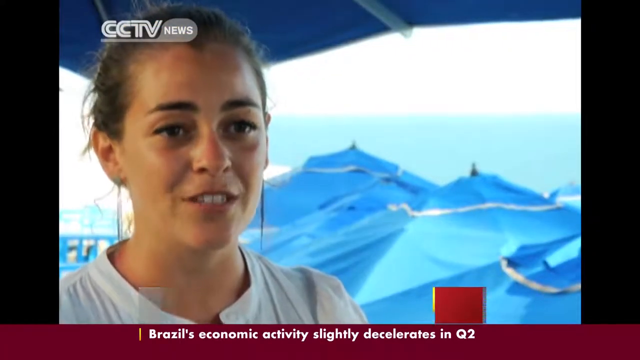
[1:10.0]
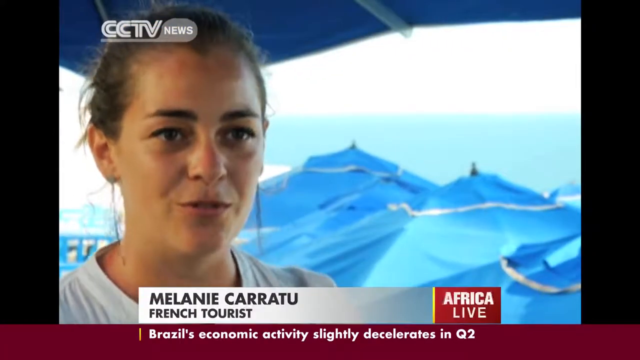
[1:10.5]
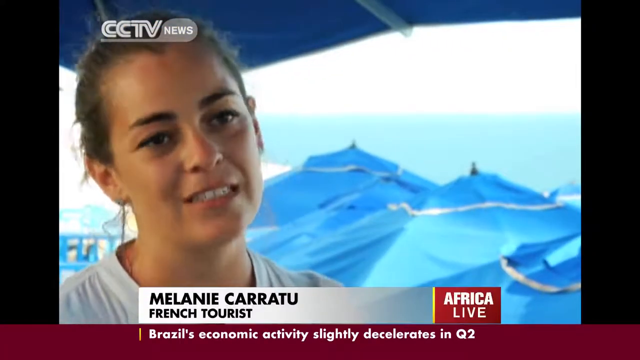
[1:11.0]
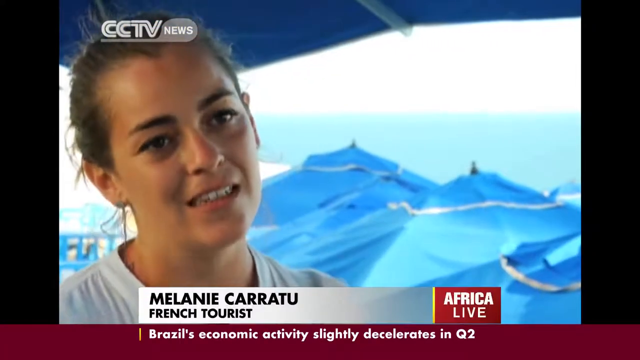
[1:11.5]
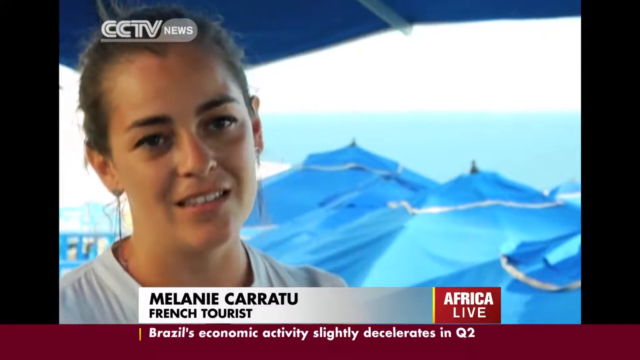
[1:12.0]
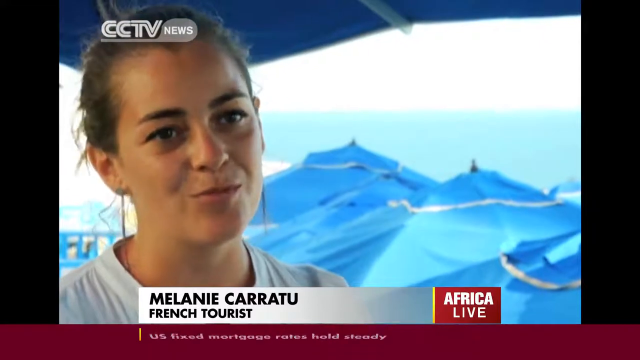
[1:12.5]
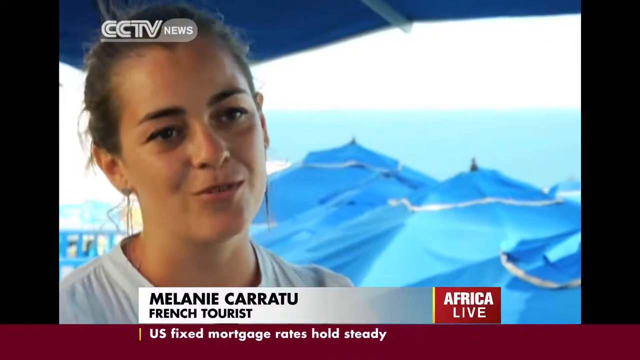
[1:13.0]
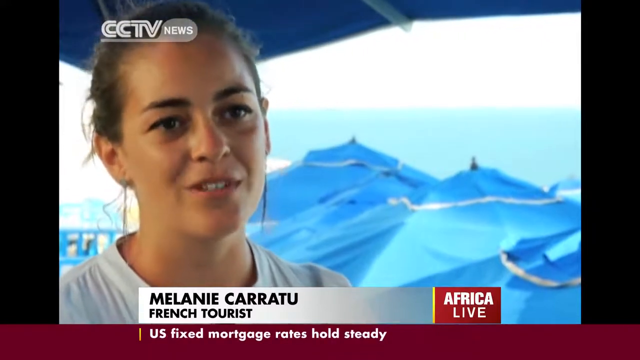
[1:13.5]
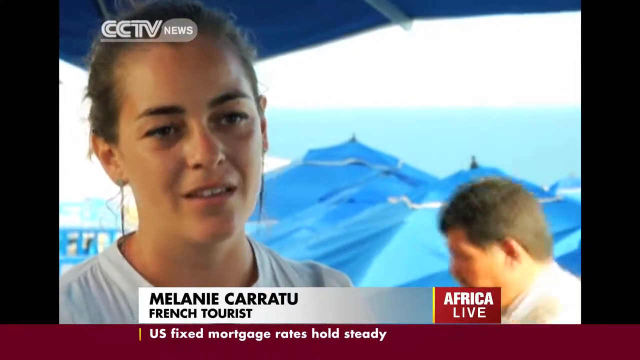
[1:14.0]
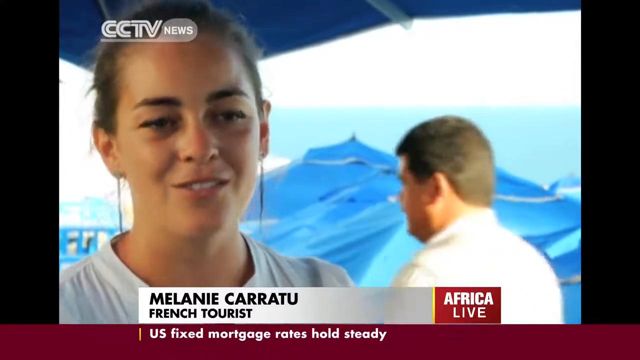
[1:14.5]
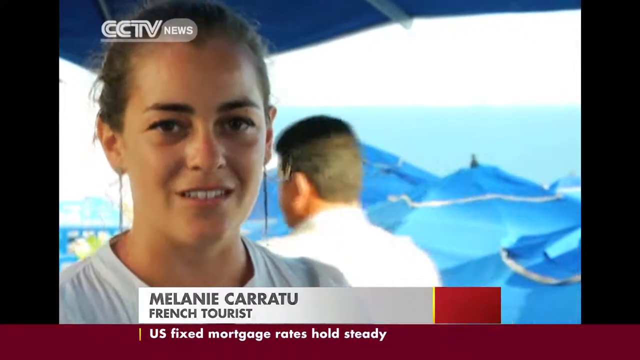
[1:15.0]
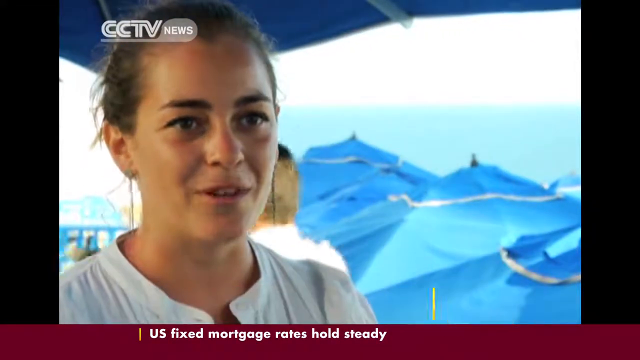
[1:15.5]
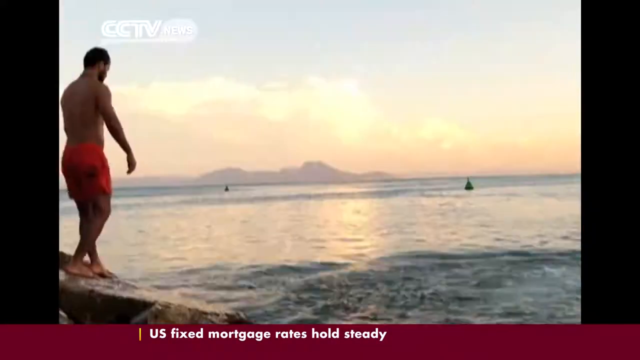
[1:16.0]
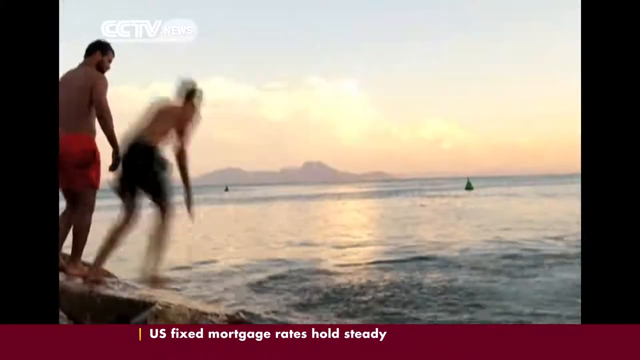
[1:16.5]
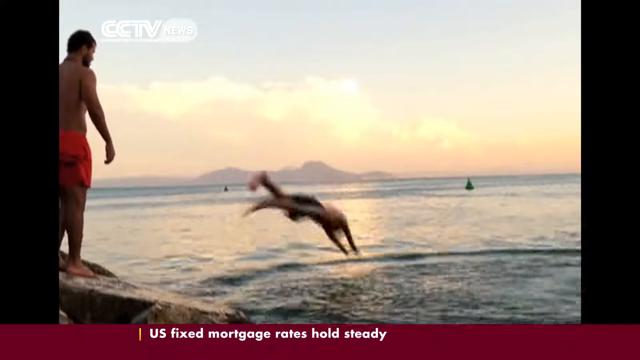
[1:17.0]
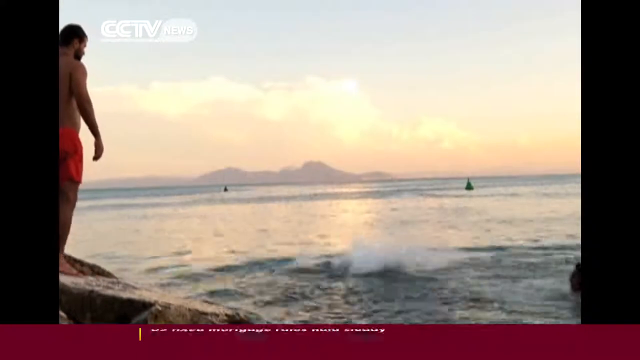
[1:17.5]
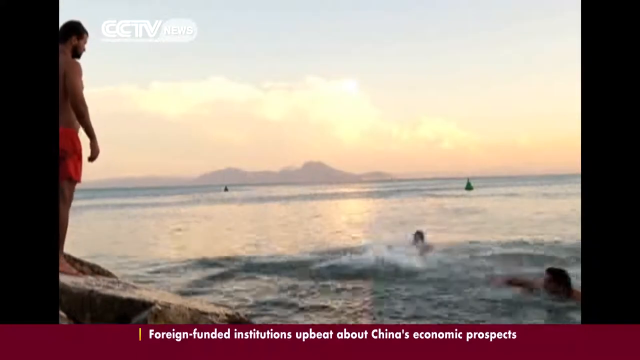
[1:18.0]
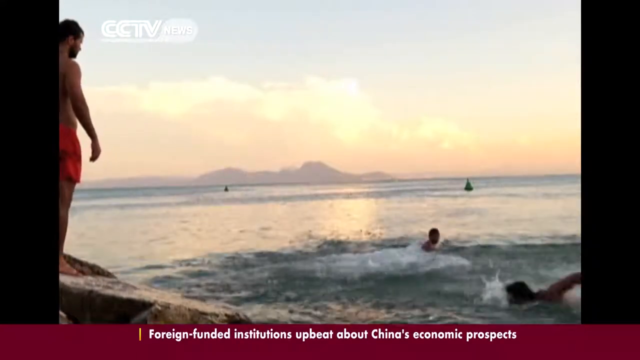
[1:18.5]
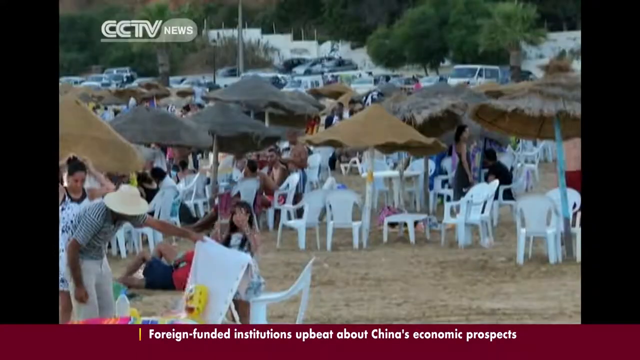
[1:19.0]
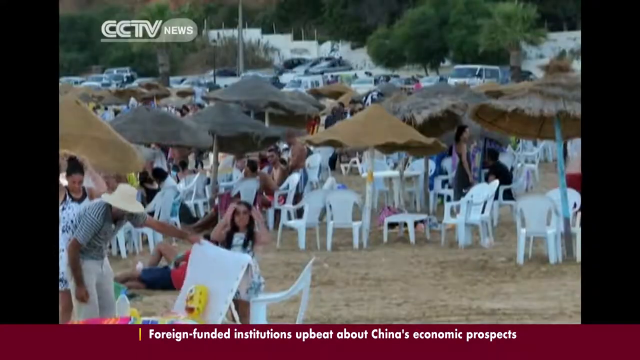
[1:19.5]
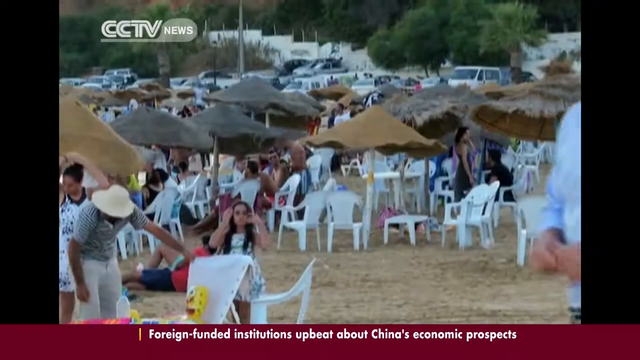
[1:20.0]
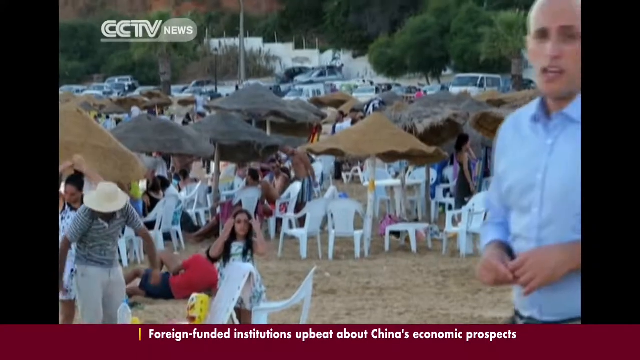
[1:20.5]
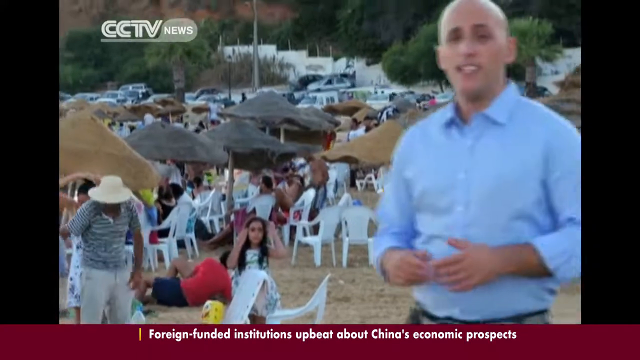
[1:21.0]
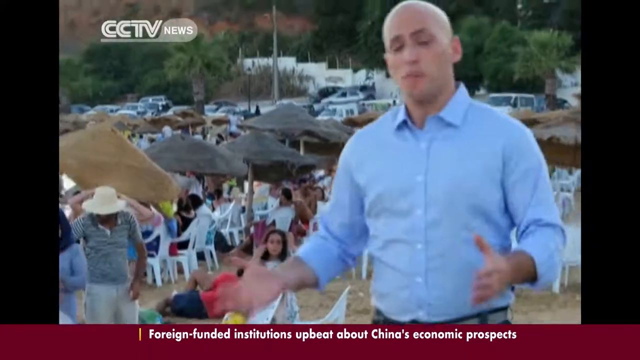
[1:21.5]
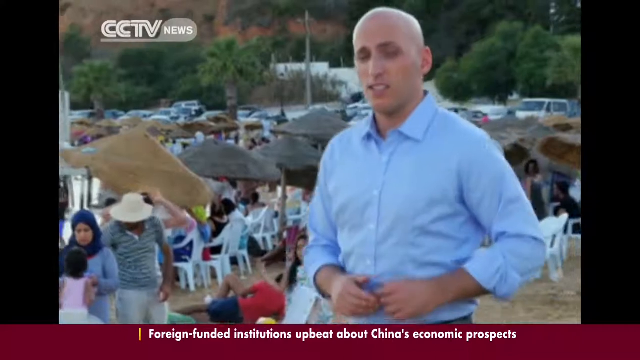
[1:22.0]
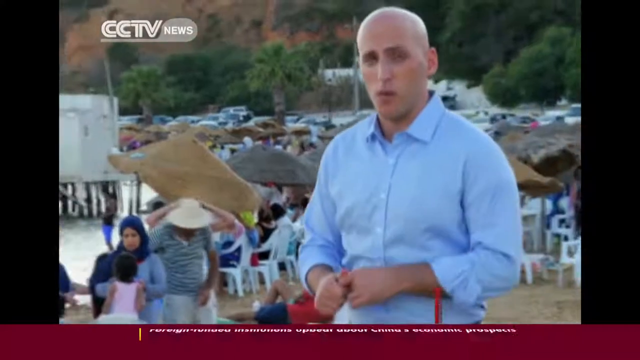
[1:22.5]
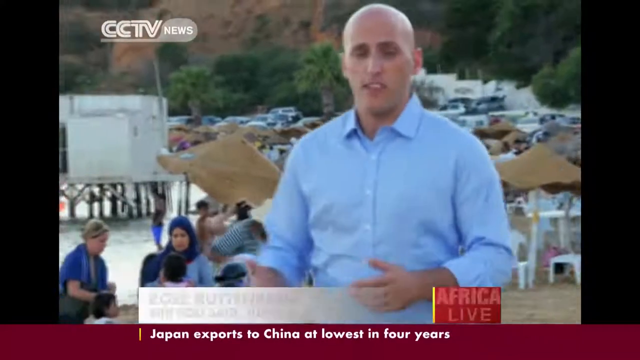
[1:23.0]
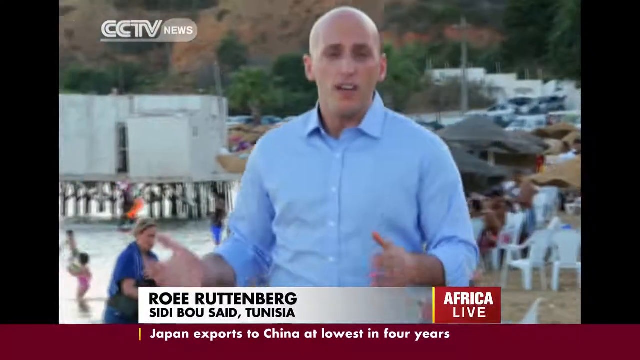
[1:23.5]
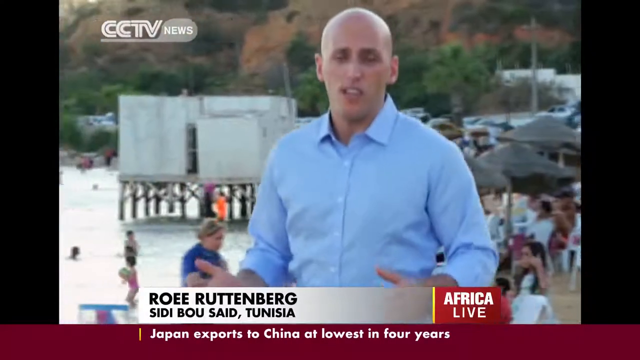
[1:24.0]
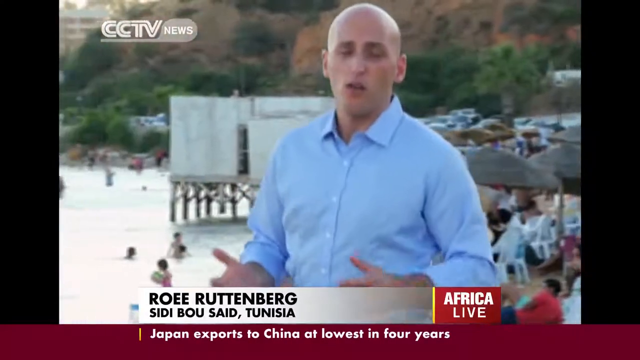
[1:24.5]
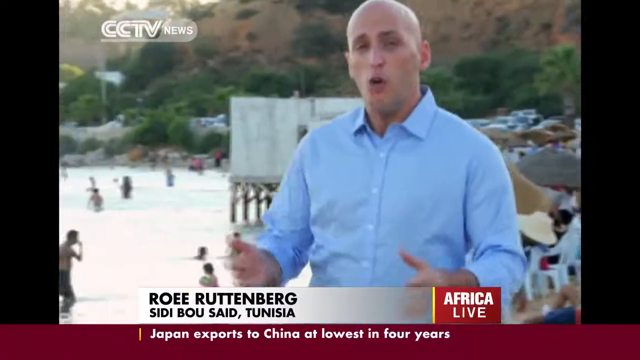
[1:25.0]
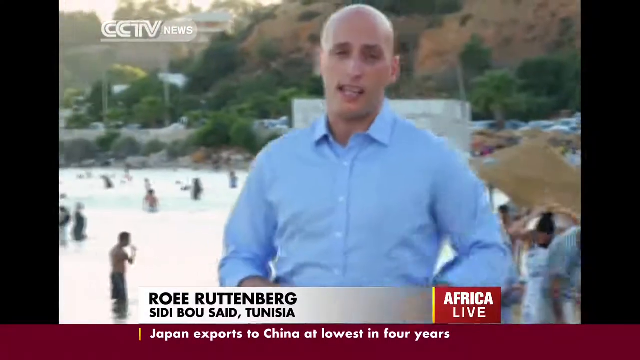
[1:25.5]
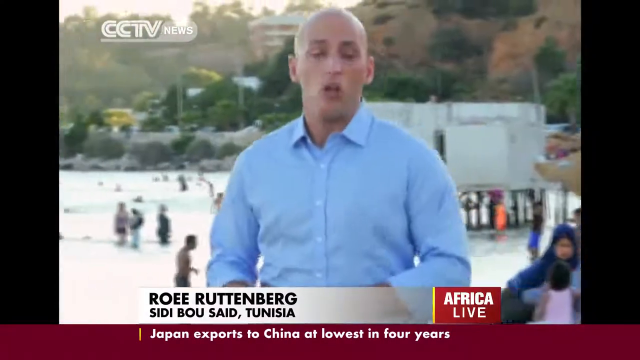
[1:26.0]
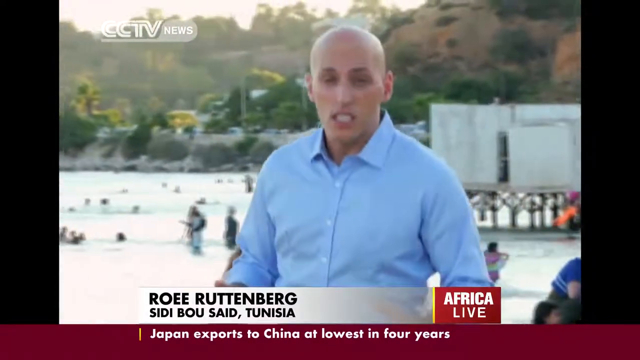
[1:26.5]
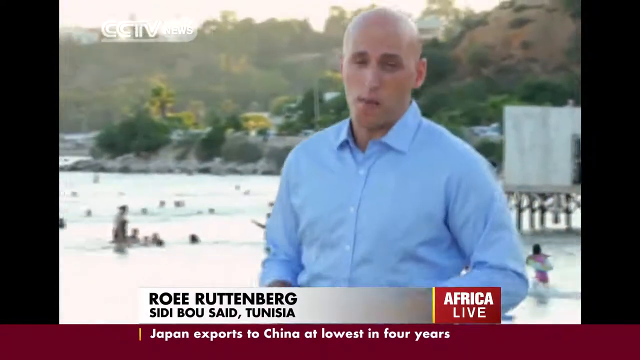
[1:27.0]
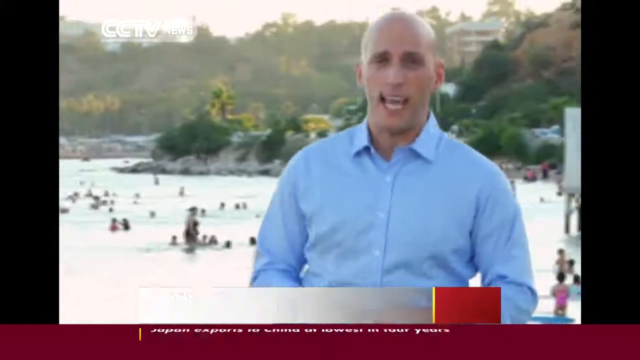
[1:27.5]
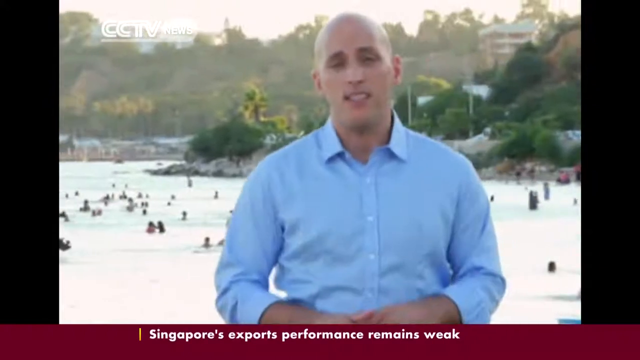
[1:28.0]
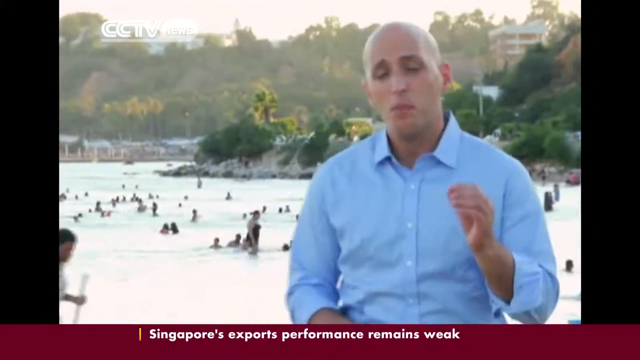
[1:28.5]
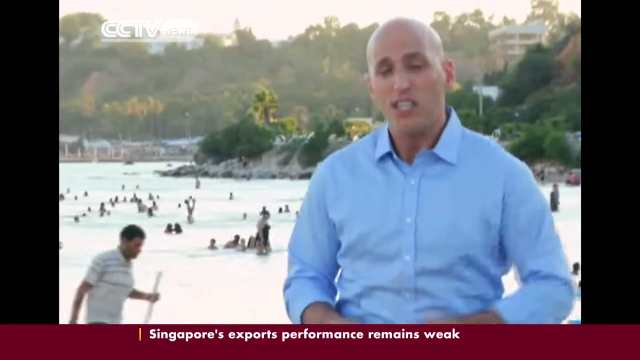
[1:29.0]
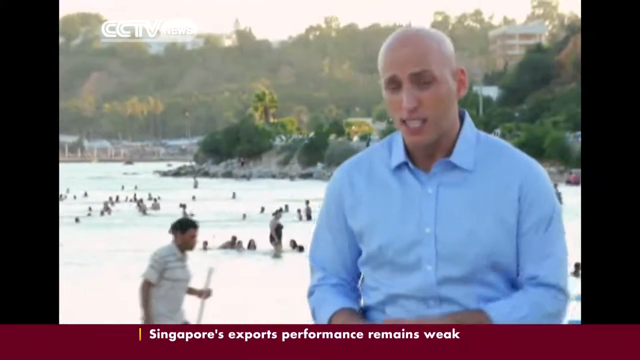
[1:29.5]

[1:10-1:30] The interview with the white tourists sitting at the resort by the beach continues, with blue umbrellas behind them on a very bright, sunny day. A French tourist named Mélanie Carateur, wearing a white t-shirt with her hair pulled back, looks happy as she gives her opinion to somebody off screen. Another static shot shows what looks like local people jumping into the sea from a boat ramp at sunset, with mountains in the distance. The video then transitions to a beach with many white plastic chairs and umbrellas and lots of tourists sitting down, about 20 of them in the background. A news reporter walks into the shot wearing a blue dress shirt unbuttoned at the top with the sleeves rolled up, and gives a piece directly to the camera, looking into it. He is identified as Rowy Retuenberg, reporting from Sidi Bauer Said, Tunisia, for Africa Live.